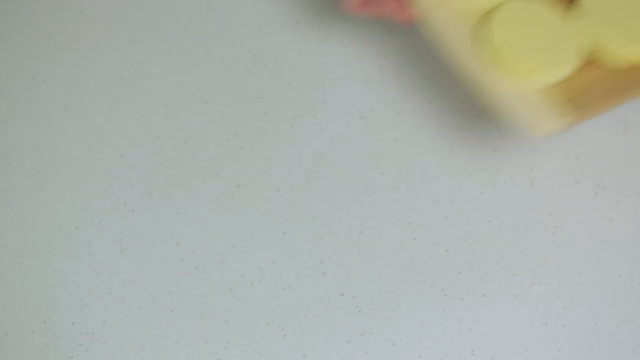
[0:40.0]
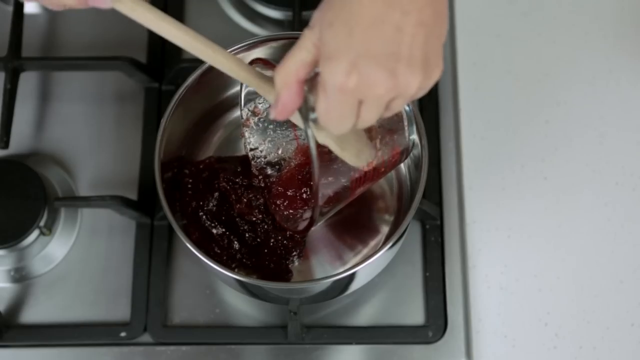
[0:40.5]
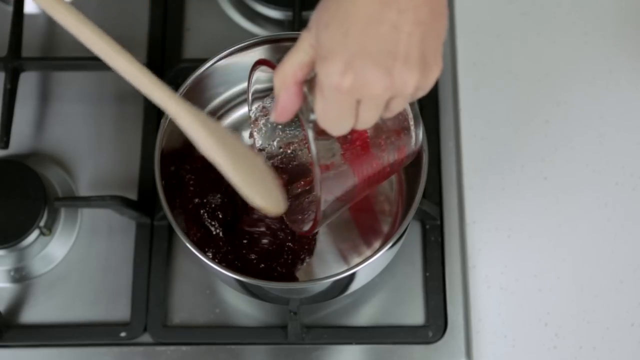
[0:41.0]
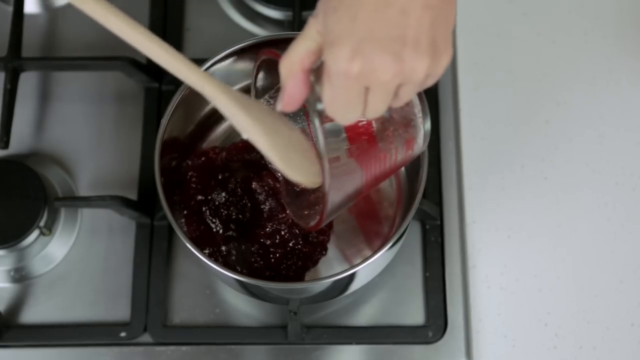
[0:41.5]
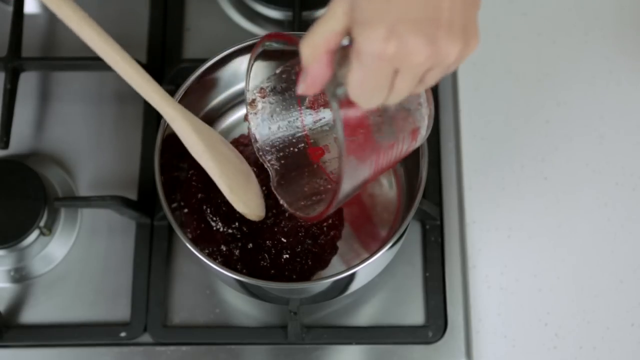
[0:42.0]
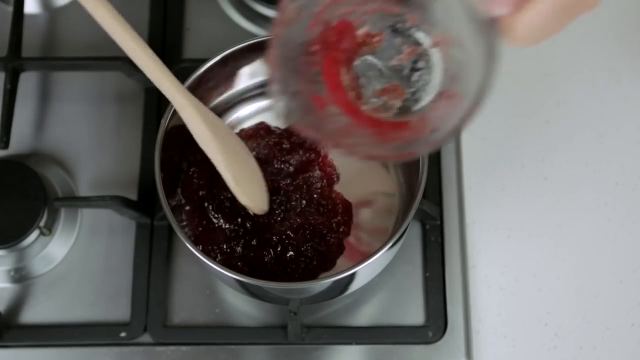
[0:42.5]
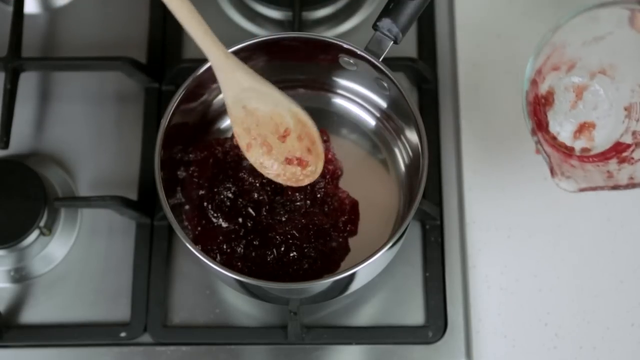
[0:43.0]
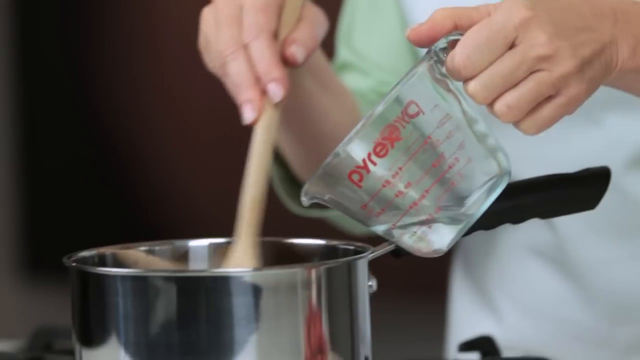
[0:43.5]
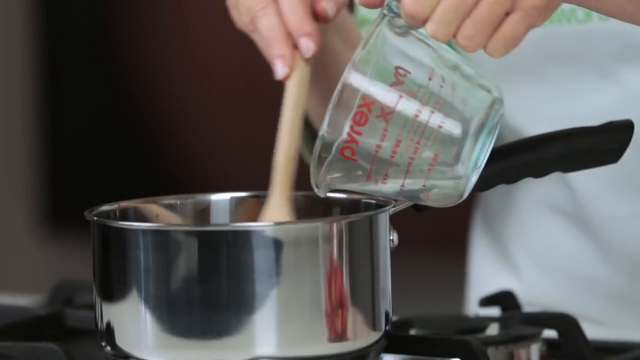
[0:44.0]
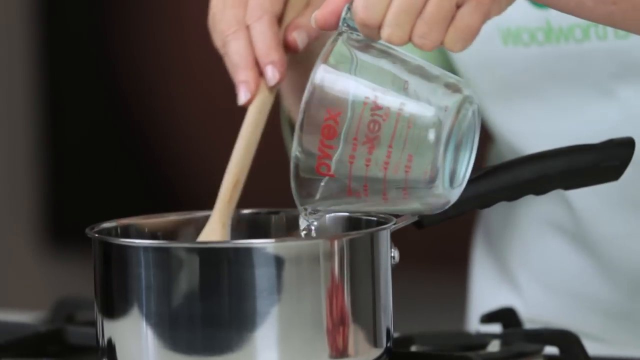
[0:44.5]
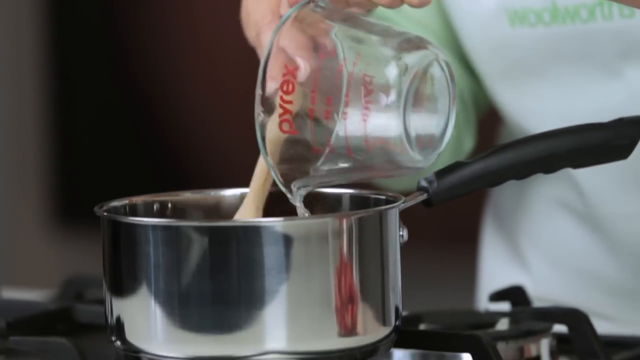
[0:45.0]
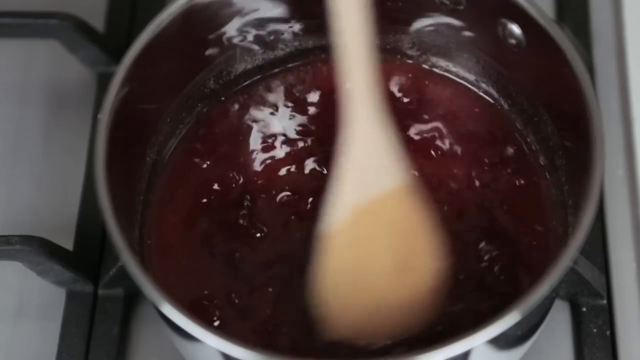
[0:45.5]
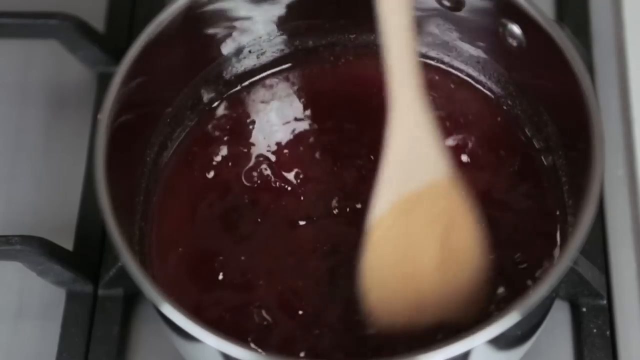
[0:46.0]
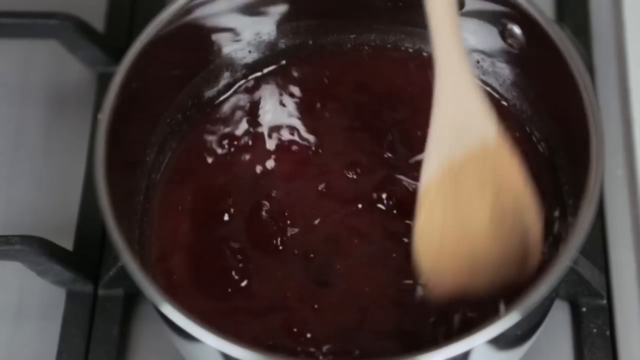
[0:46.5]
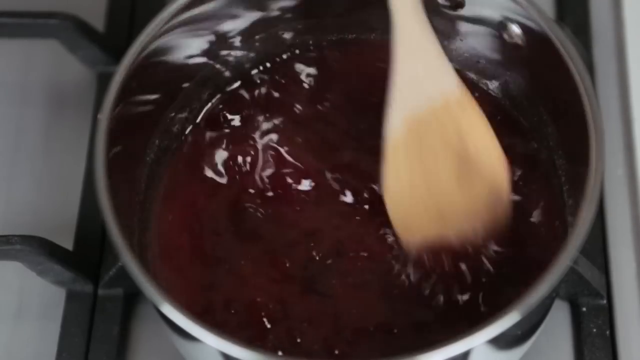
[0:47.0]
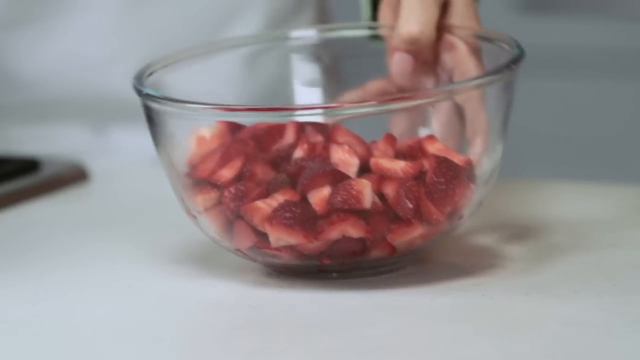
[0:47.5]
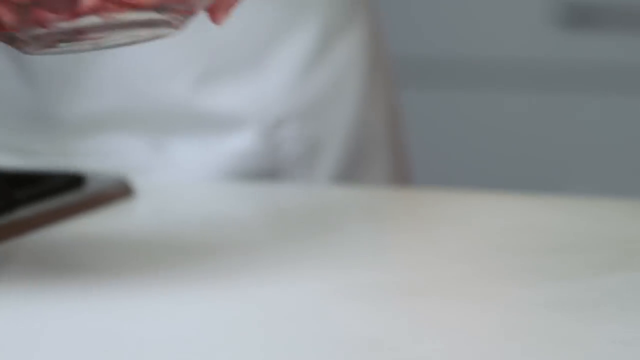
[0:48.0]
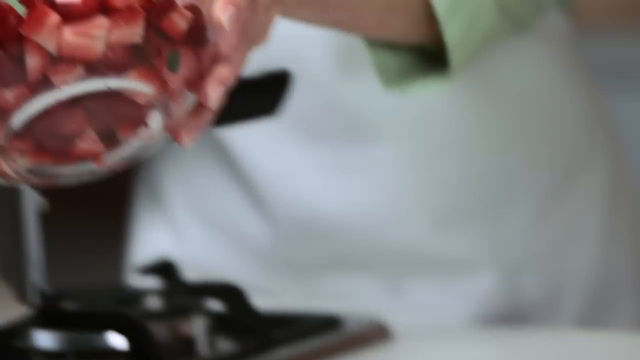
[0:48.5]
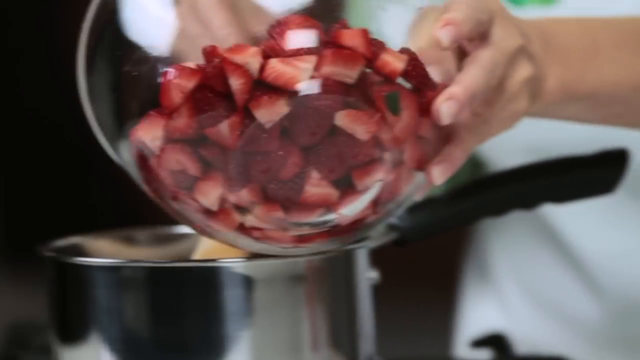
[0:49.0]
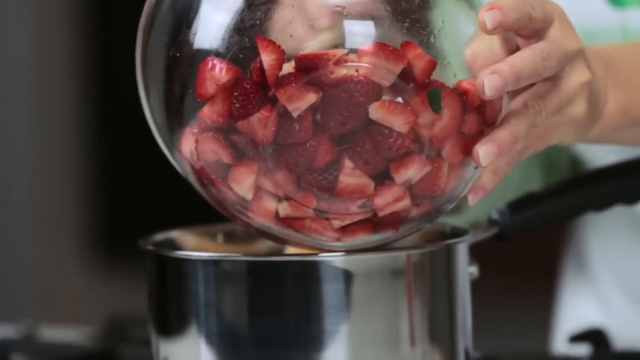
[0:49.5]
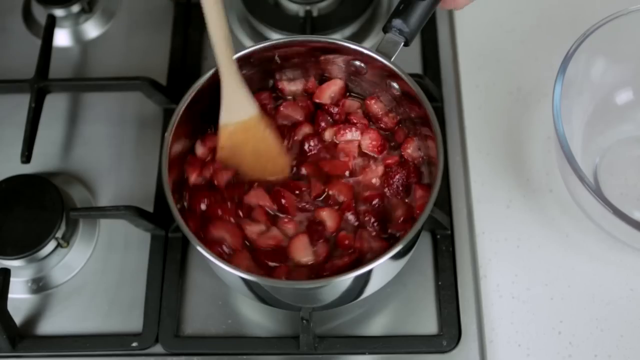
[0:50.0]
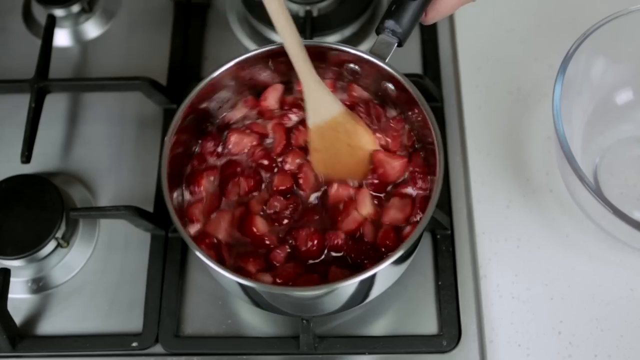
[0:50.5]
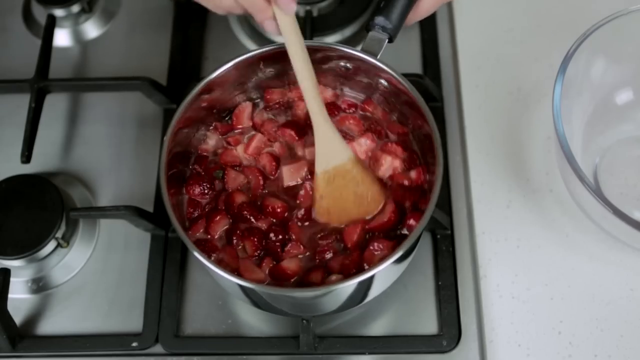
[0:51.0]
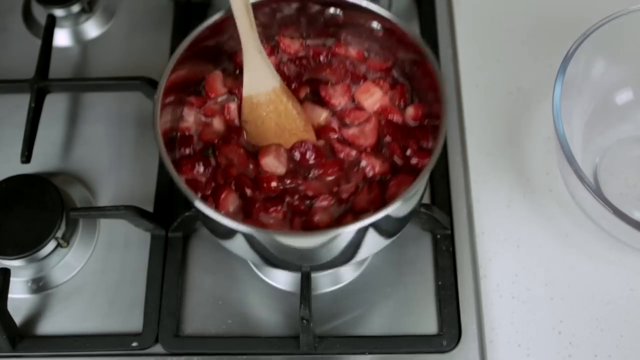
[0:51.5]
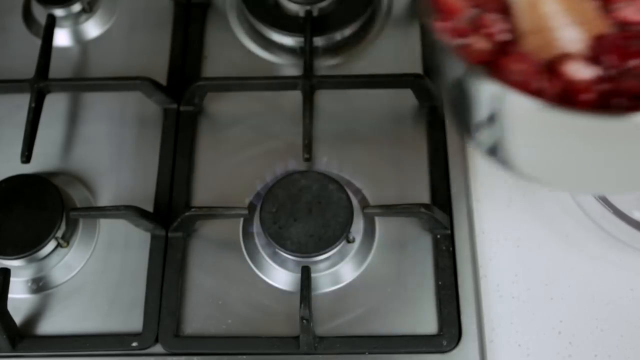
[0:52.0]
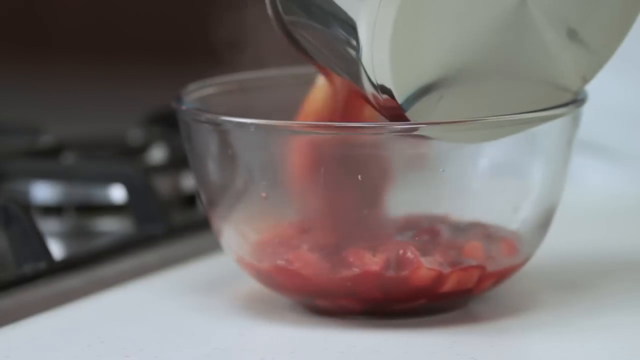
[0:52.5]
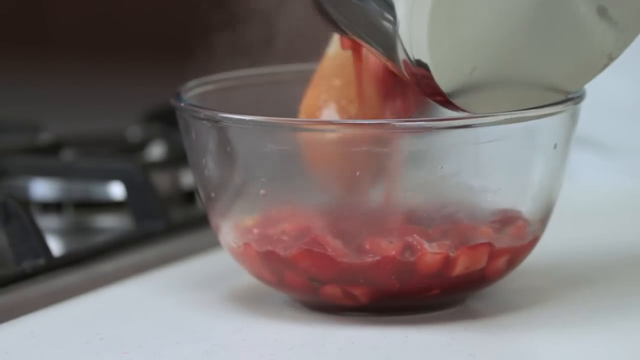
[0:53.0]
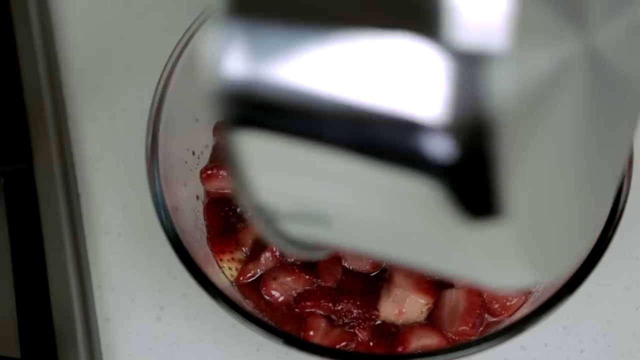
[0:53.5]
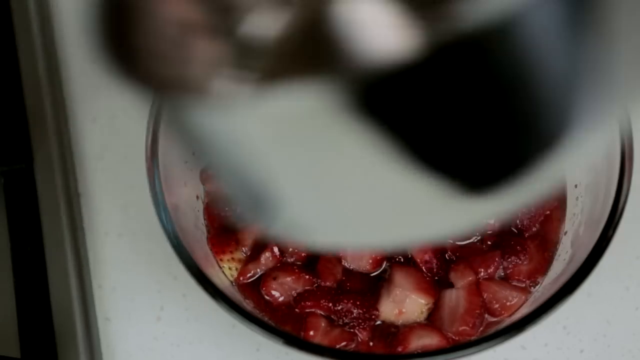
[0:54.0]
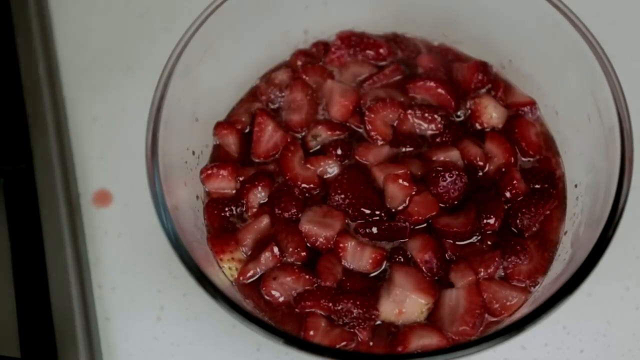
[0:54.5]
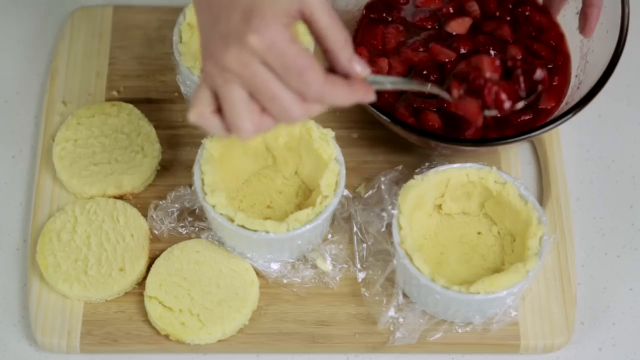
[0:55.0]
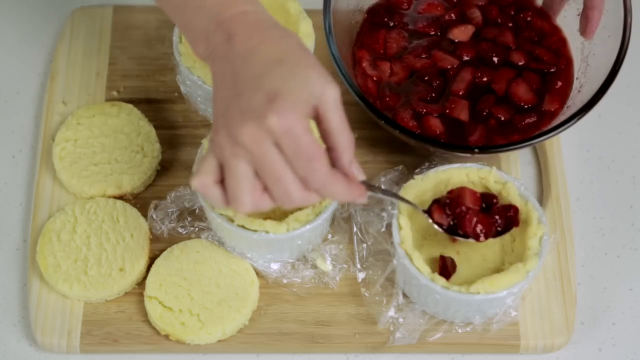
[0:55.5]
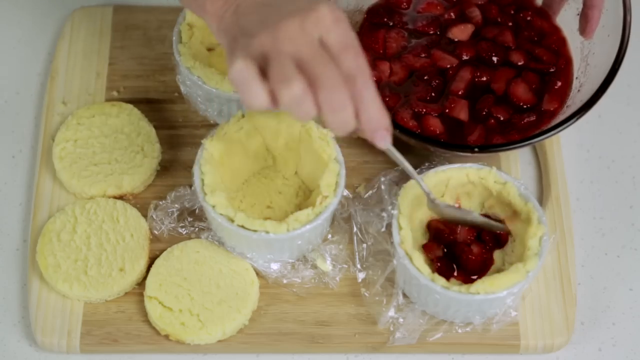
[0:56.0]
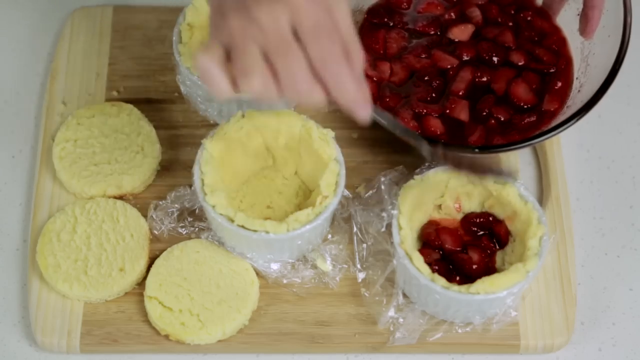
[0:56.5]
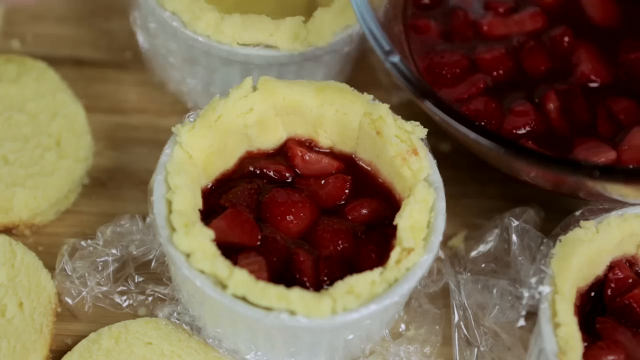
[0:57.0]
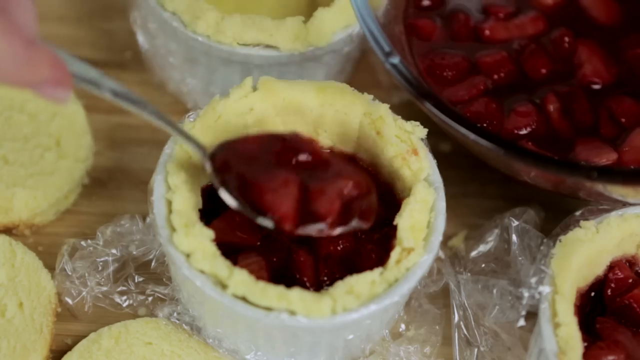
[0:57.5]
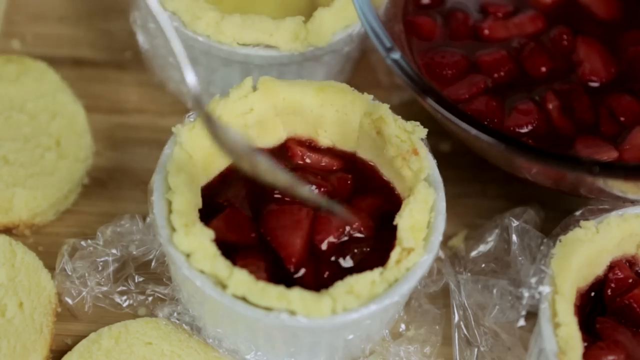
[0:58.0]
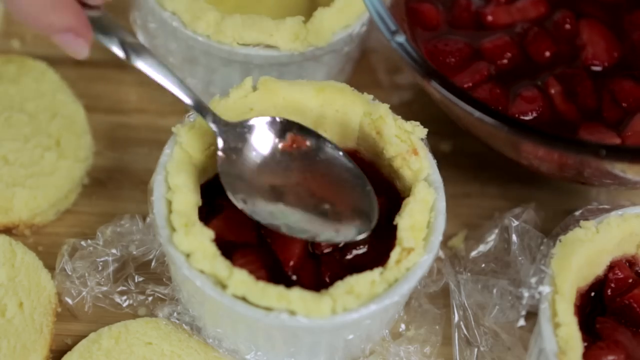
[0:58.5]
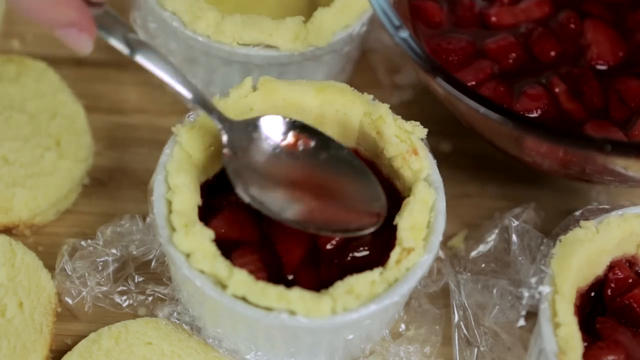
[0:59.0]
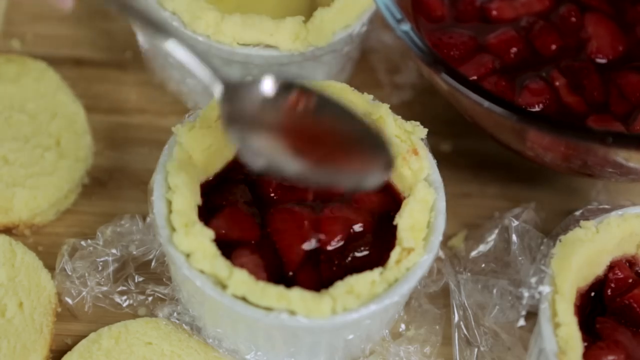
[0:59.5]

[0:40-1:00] A person holds the glass measuring cup in her left hand and, in the right hand, seems to use a wooden spatula to pour out the contents inside the ramekin into a big pot. What is being poured kind of looks like a jam, kind of a burgundy color. They mix the liquid in the pot with the spatula, then pick up a clear glass bowl holding a lot of chopped strawberries and pour the strawberries into the pot, continuing to stir them into the liquid with the spatula. They then empty the pot back into a bowl made of glass, and use a spoon to take the filling from the glass bowl and fill the ramekins that are coated with bread.